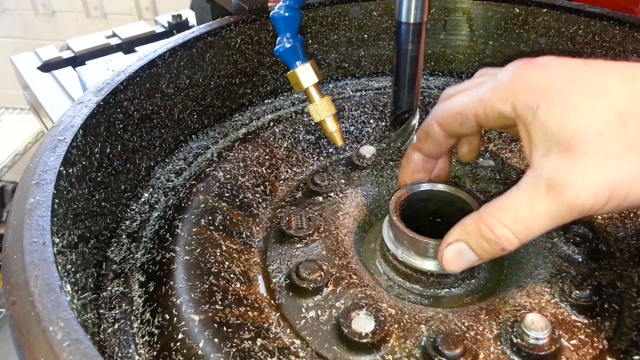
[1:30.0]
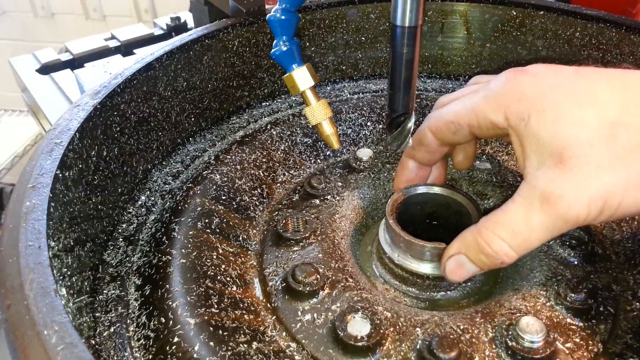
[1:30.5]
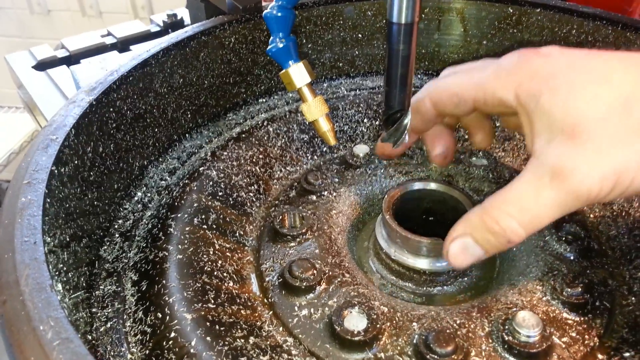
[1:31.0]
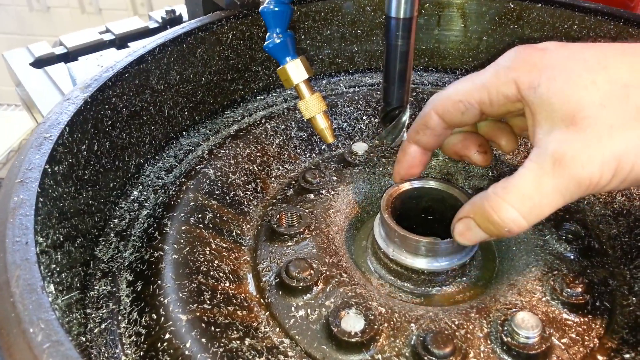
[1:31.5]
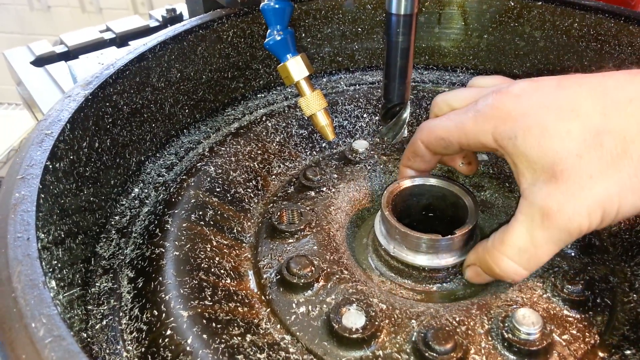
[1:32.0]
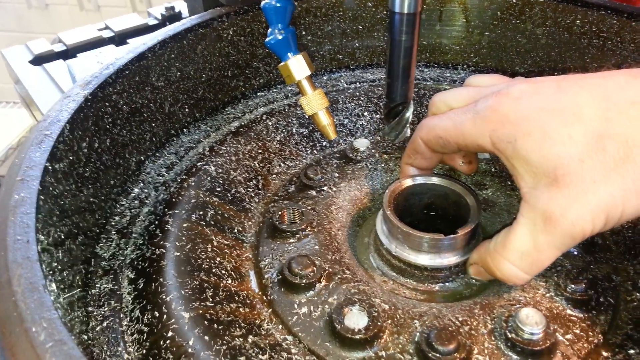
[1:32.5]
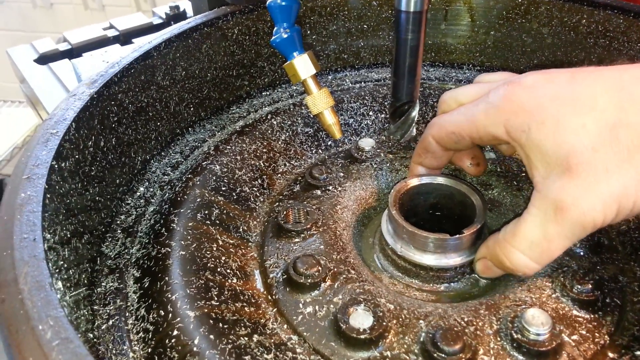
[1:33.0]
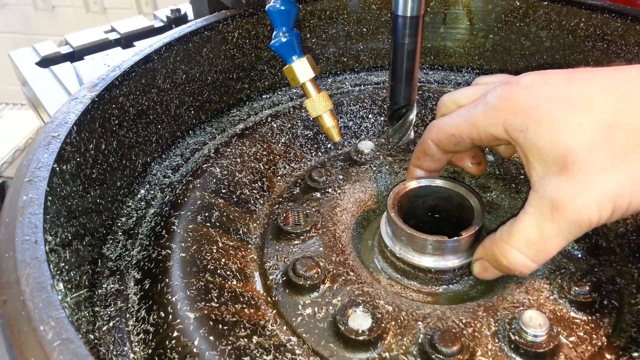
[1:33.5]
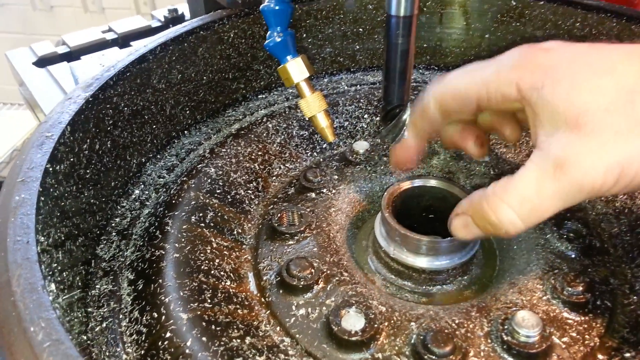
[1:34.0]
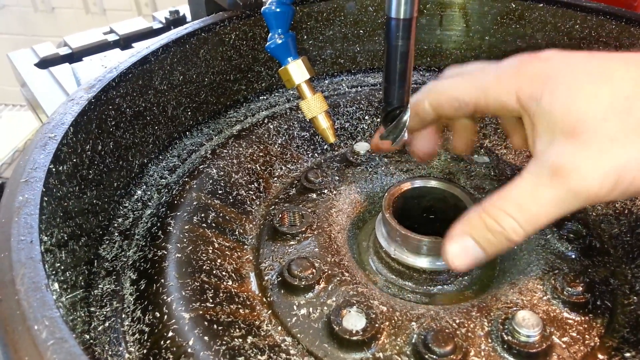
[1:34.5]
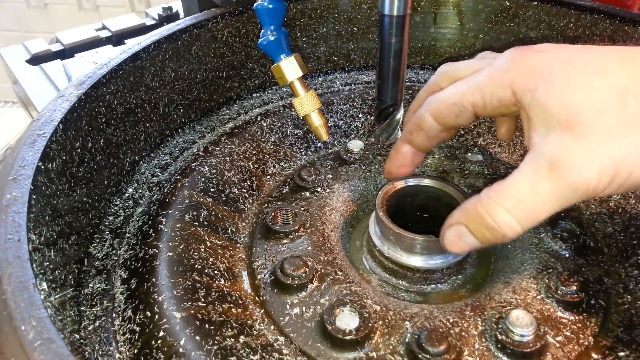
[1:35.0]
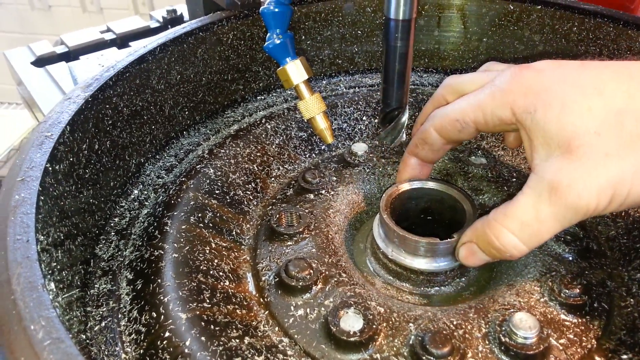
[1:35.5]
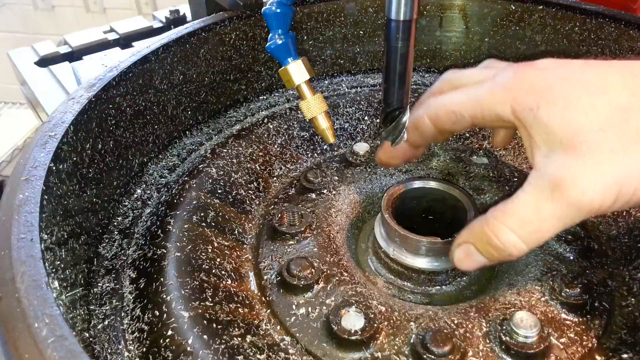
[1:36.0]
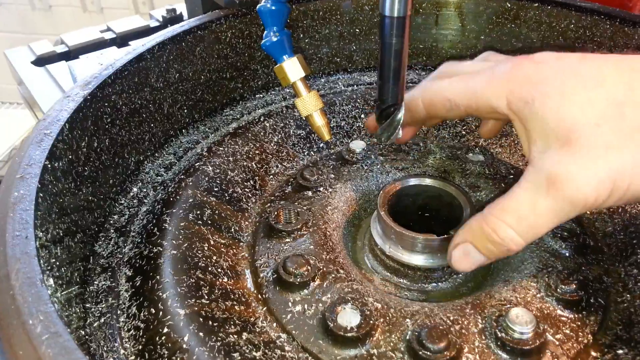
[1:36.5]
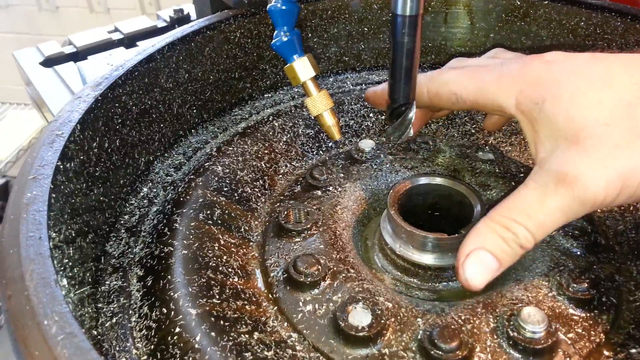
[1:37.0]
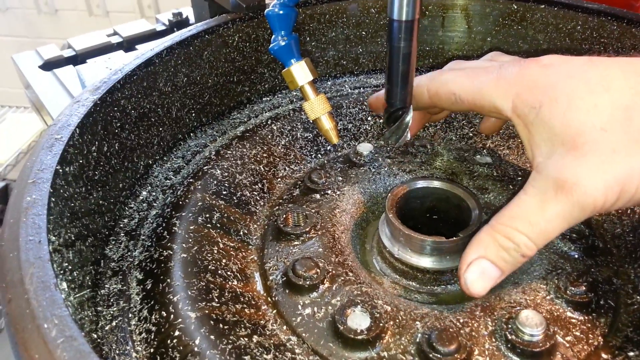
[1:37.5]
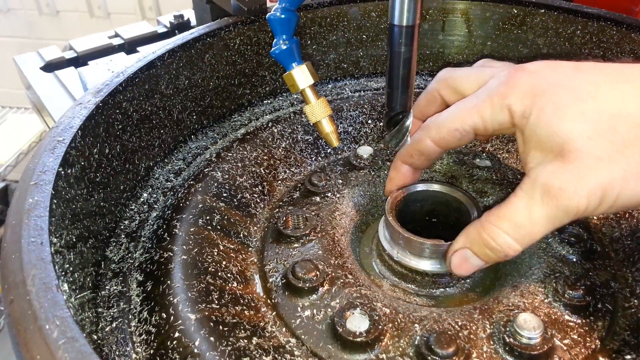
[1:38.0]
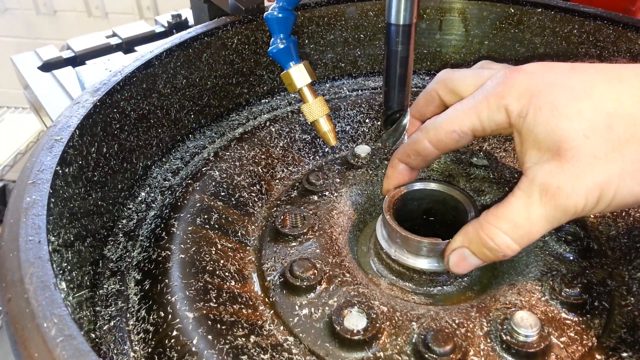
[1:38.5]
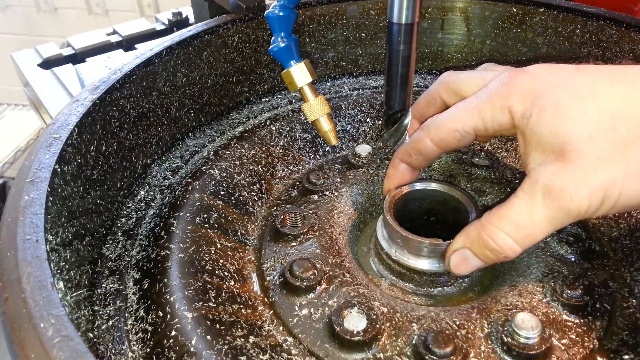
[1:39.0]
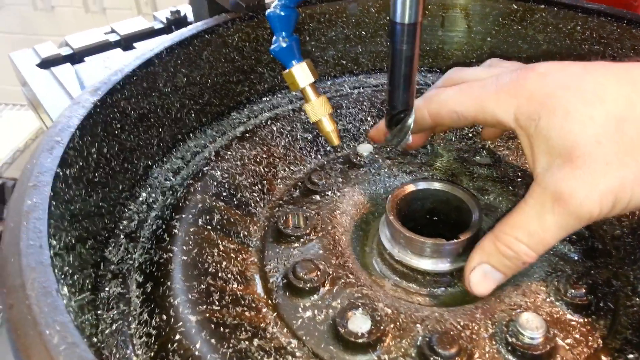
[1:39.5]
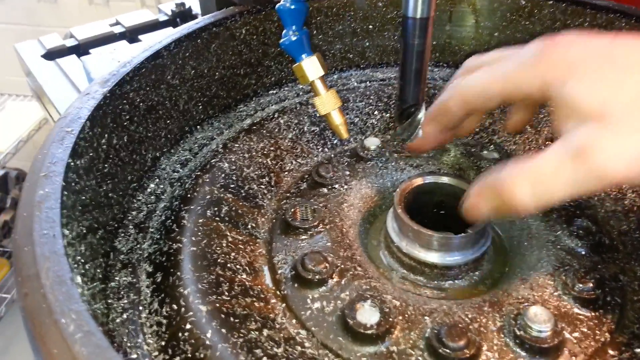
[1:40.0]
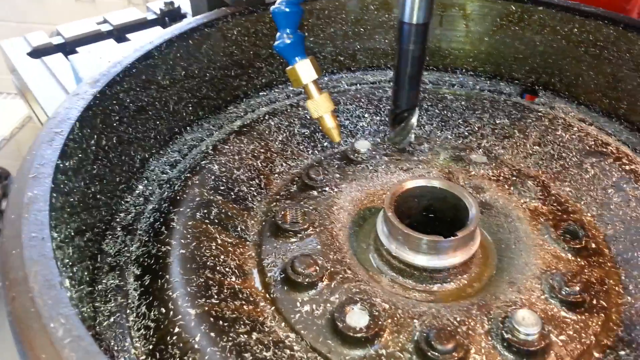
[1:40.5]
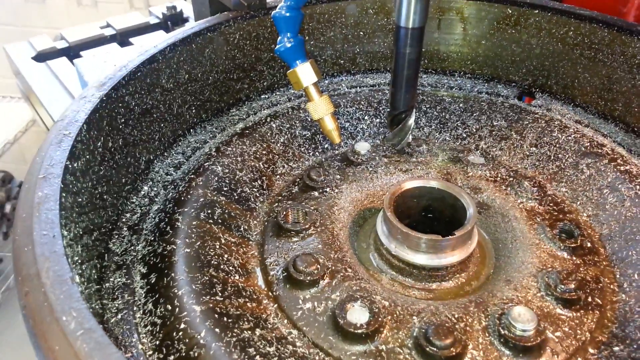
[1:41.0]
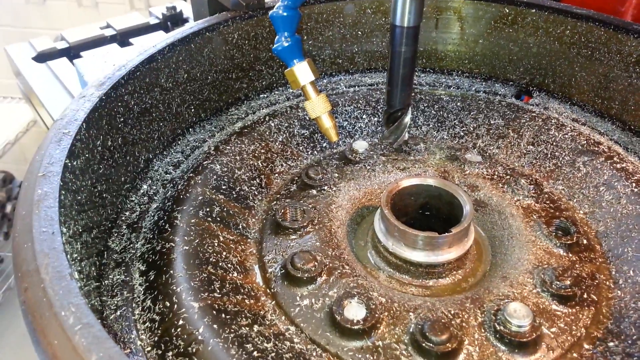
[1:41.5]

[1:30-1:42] A person has their fingers around the center of a hub that is underneath a drill, using them to gauge the diameter of the center hole. They move their fingers a little further down to gauge the difference between the top and bottom of the hole, and move their hand up and down a couple of times as if emphasizing something. They open their hand wide with fingers outstretched, as if seeing how wide it could be, then bring their fingers back in closely so they clamp down on the round center part again. Then they lift their hand and pull it away. Next to the drill, a blue hose comes down with a copper-colored nozzle on the end, apparently for spraying water onto the drill to keep it cool while it drills.